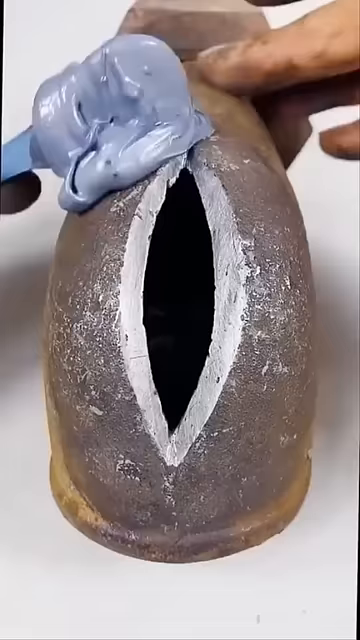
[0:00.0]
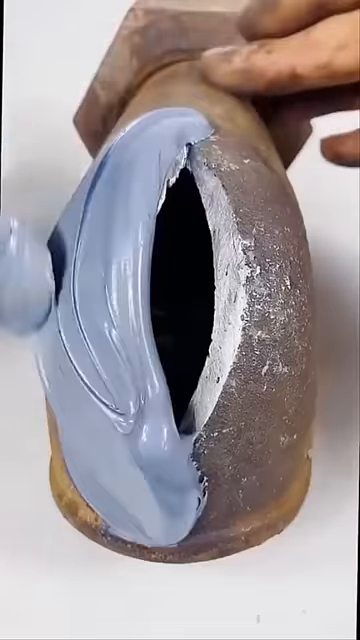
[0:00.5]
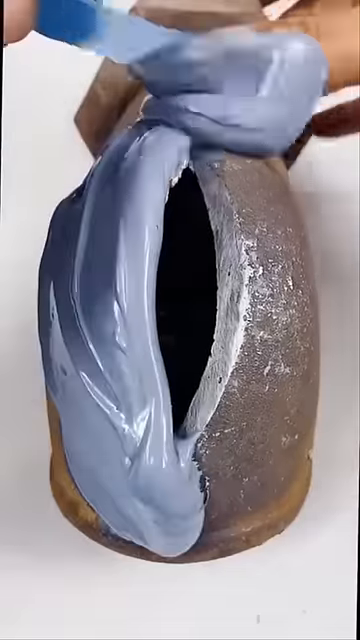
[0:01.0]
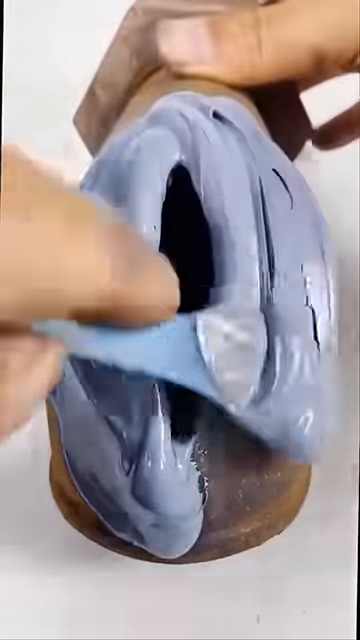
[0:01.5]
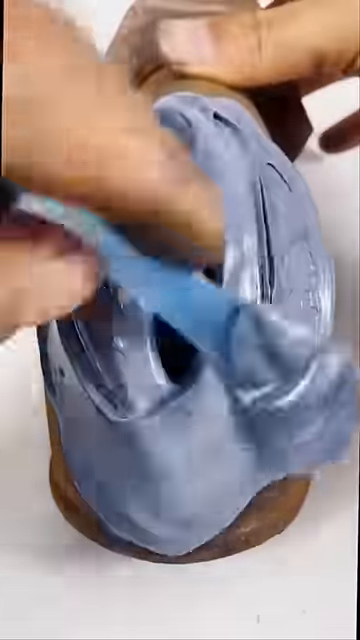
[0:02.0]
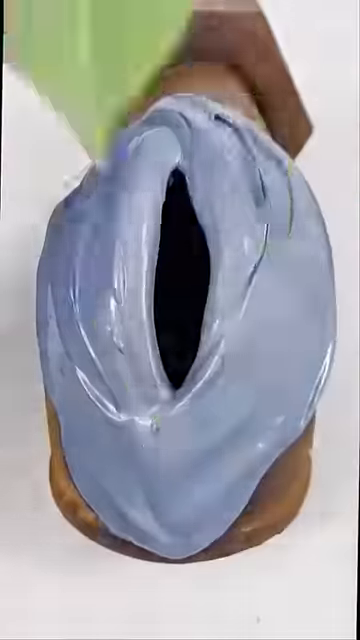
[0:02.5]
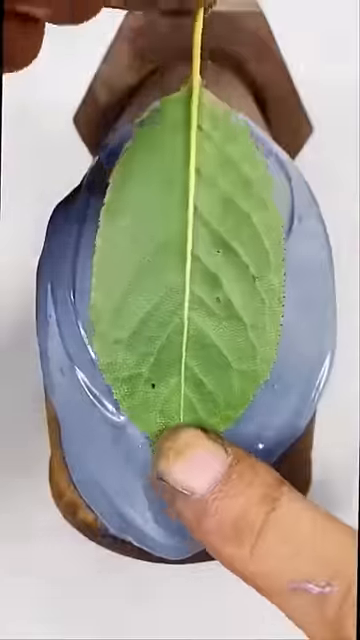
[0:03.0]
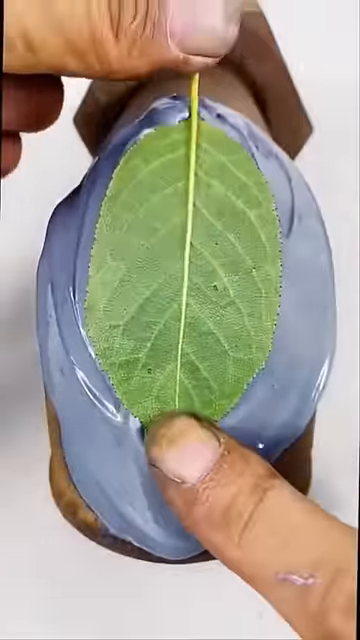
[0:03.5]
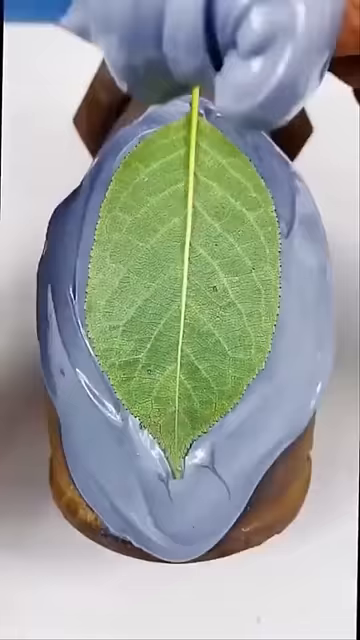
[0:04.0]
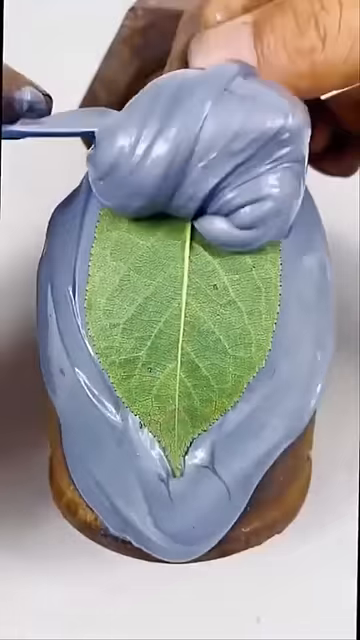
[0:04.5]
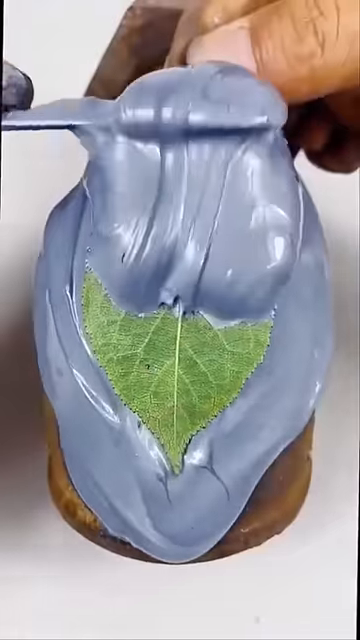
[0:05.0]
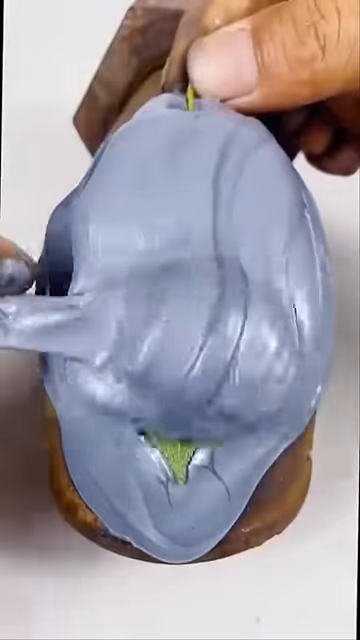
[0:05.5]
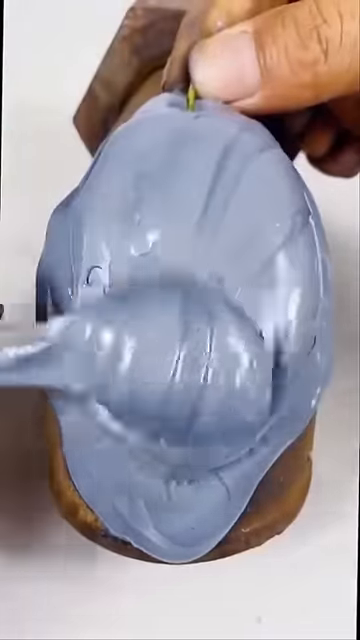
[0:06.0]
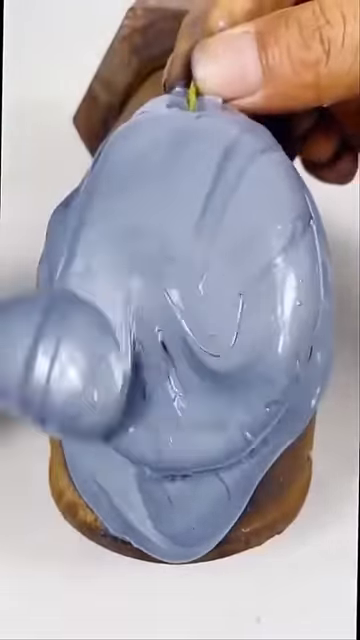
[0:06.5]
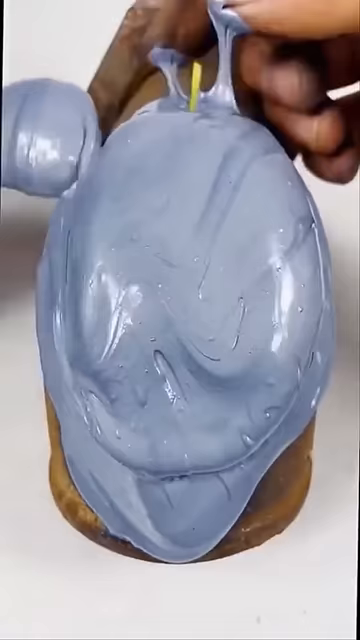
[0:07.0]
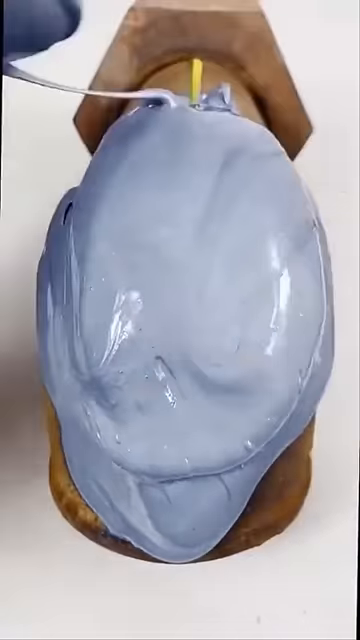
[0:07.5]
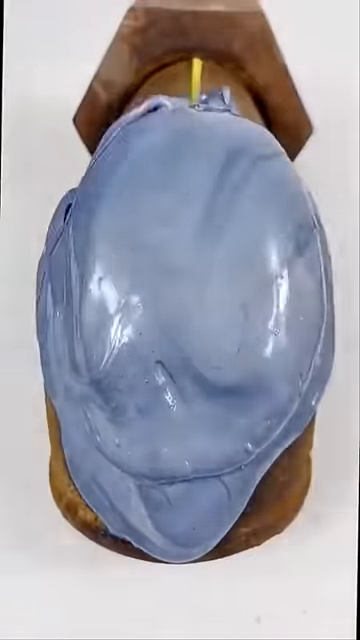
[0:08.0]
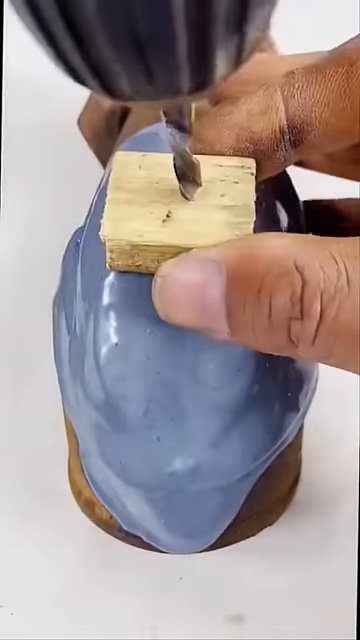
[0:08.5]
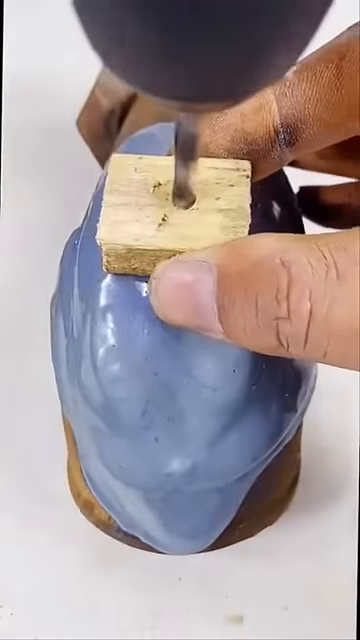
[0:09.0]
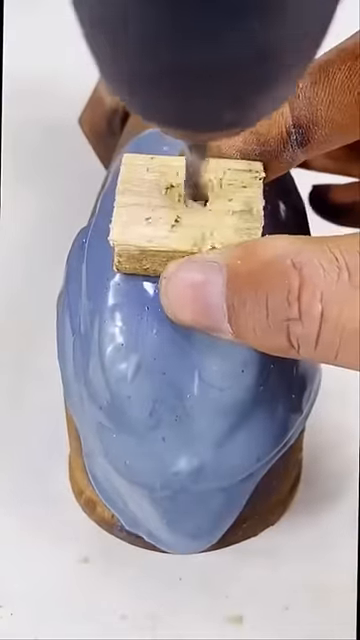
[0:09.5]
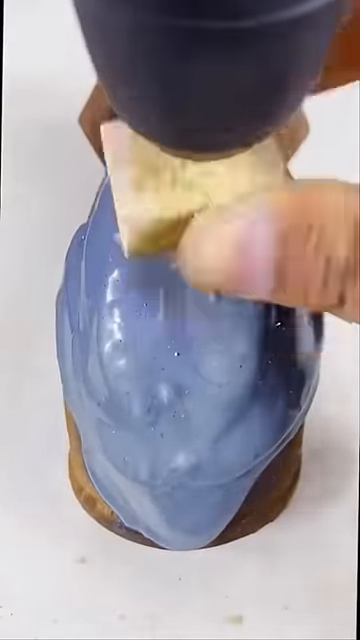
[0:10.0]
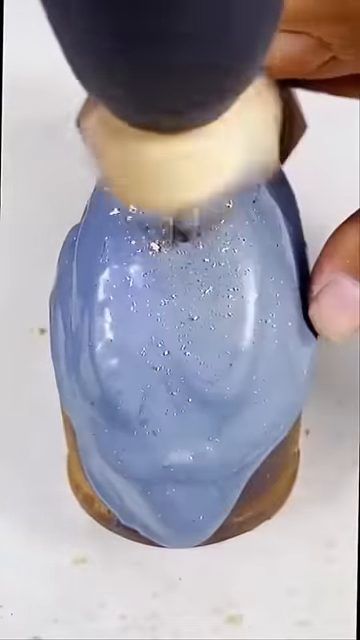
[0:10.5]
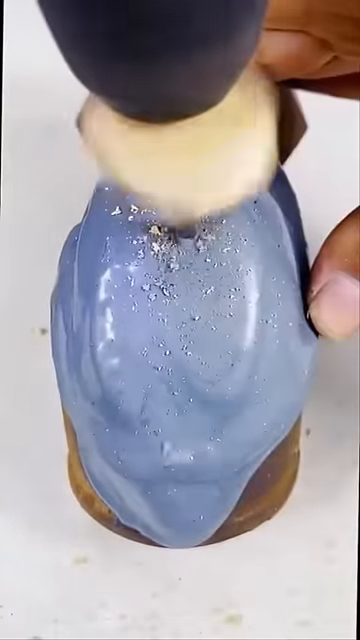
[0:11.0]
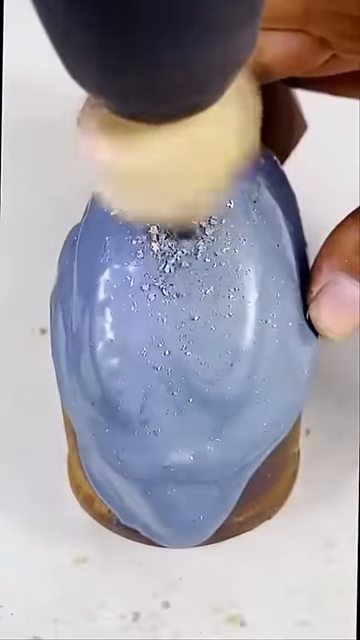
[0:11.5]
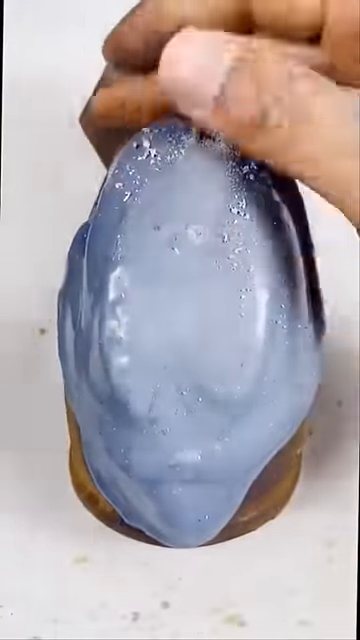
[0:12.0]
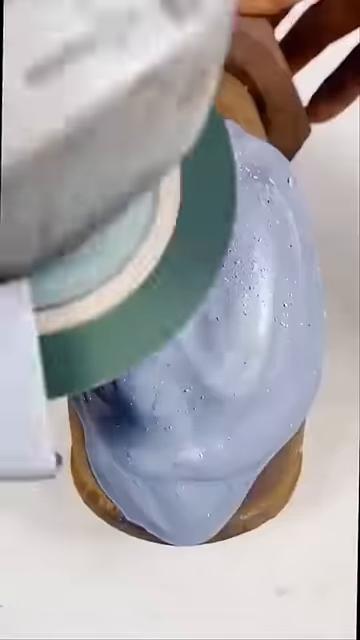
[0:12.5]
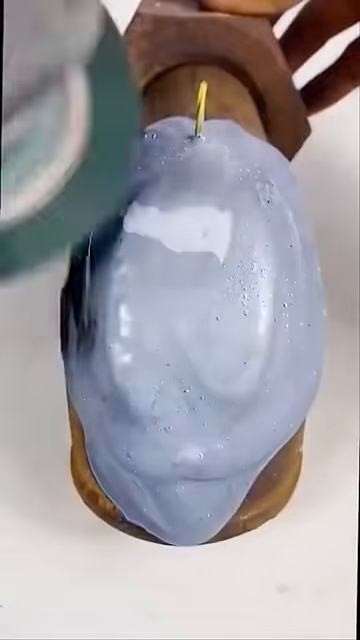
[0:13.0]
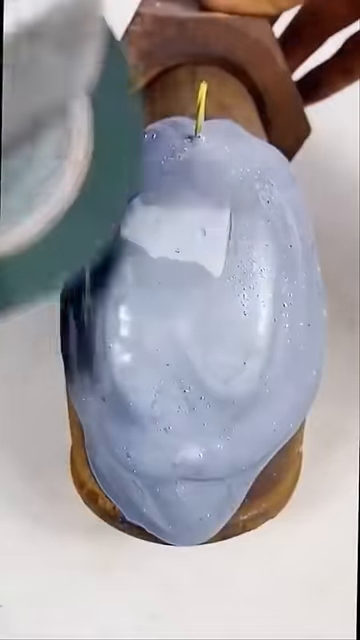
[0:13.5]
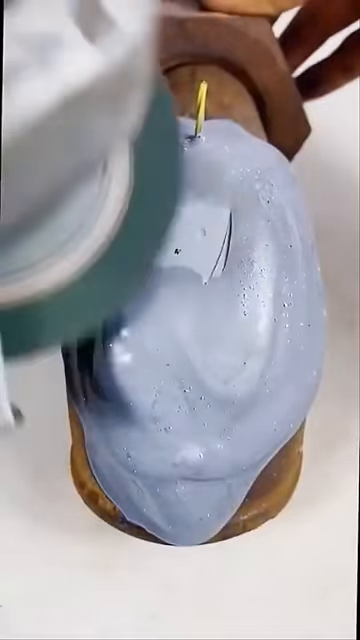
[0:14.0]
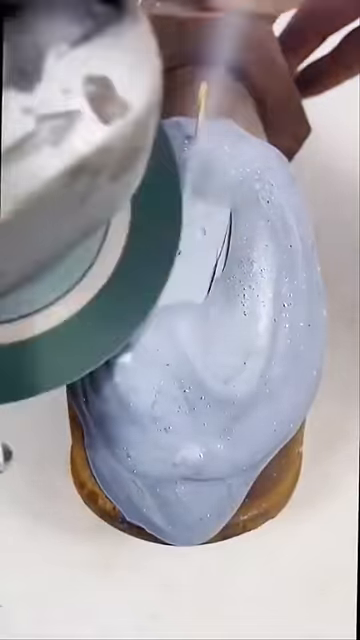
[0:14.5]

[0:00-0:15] A person appears to be painting something, applying what seems to be some kind of purplish plaster onto an object that looks somewhat like metal, possibly a vase. The vase seems to have a hole; he applies the purple plaster, puts a leaf on top of the plaster to cover the hole, and then puts more plaster over it. He then grabs what looks like a wooden cube and gets a drill. Using the wood as a sort of placeholder, he drills right into the plaster where the giant hole used to be, making a little hole that penetrates right through the plaster. After cutting the hole, he uses a sander to sand down the part he just drilled.